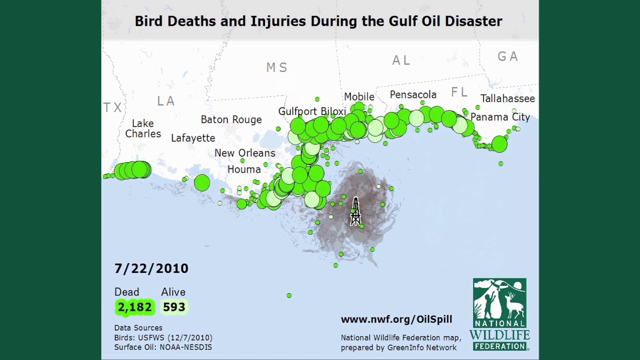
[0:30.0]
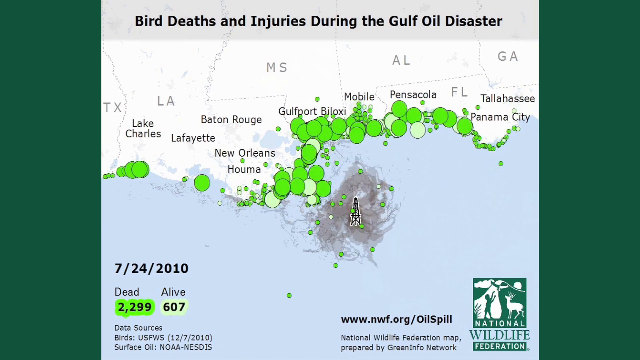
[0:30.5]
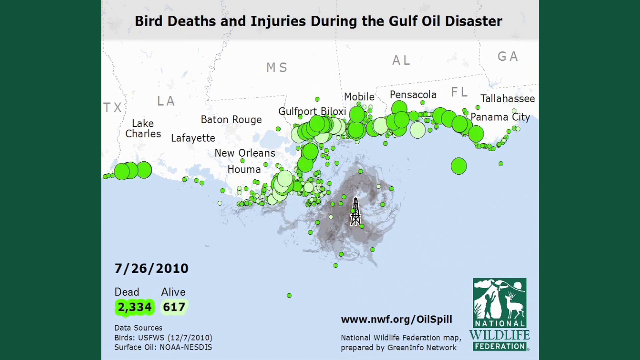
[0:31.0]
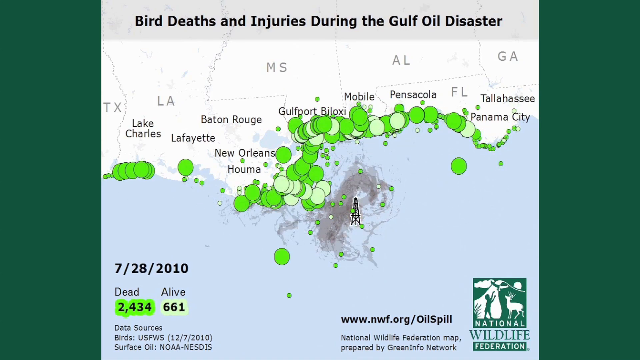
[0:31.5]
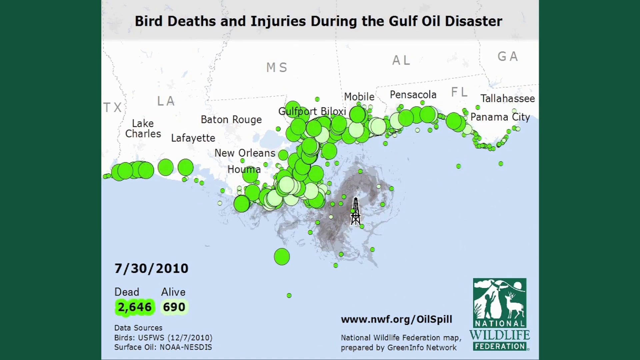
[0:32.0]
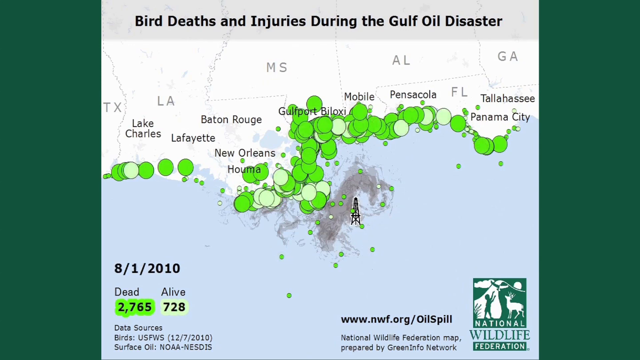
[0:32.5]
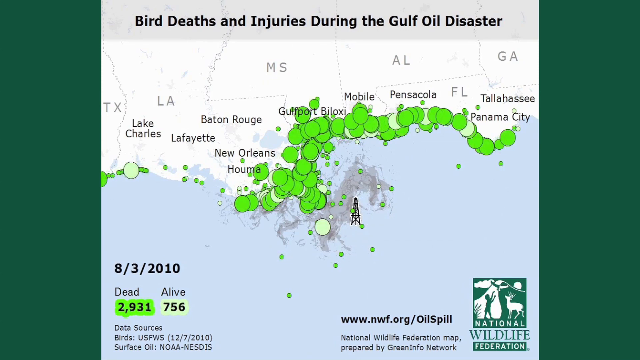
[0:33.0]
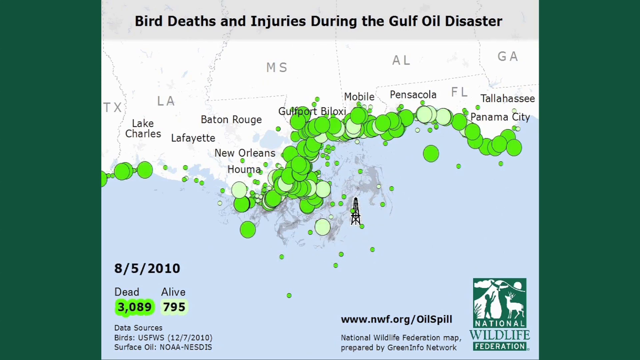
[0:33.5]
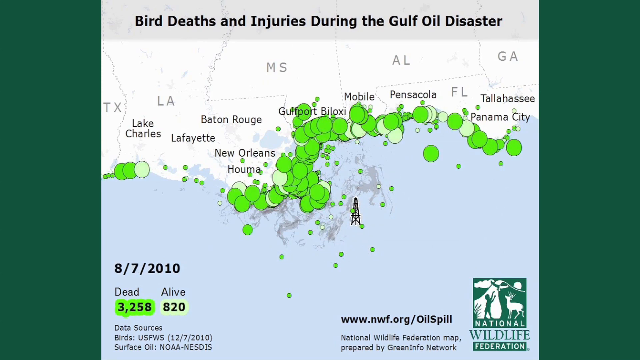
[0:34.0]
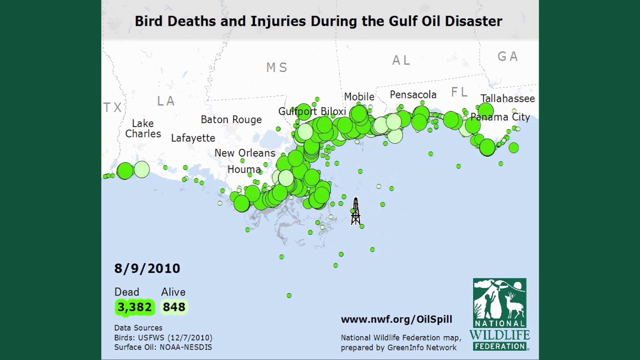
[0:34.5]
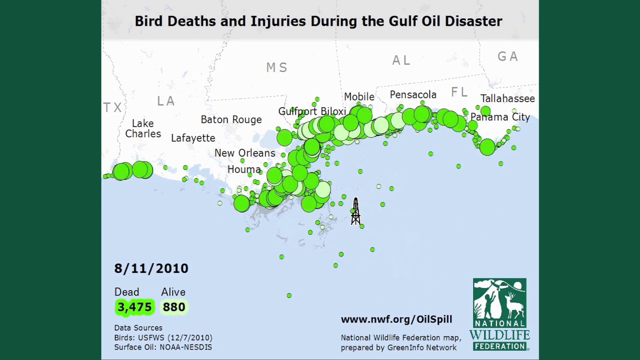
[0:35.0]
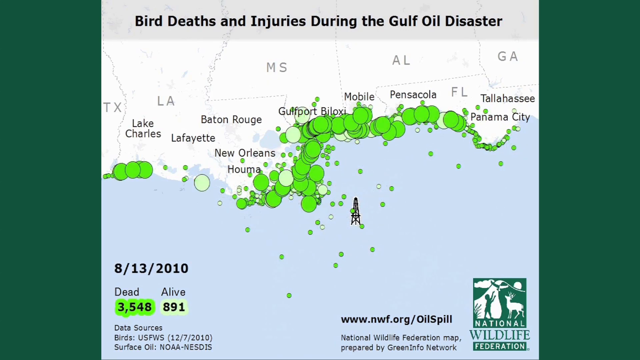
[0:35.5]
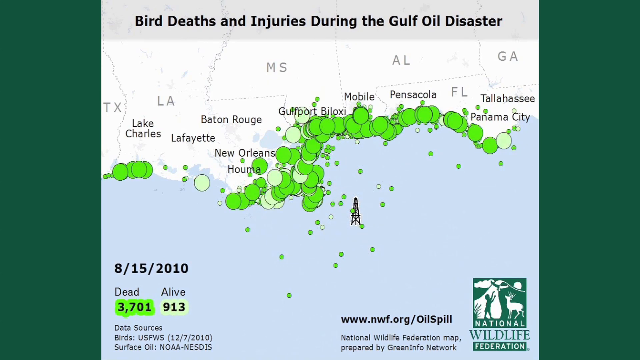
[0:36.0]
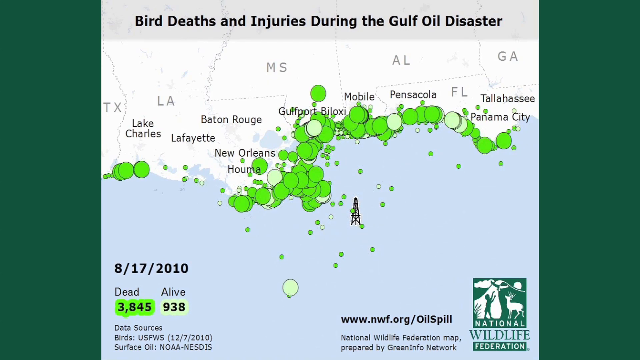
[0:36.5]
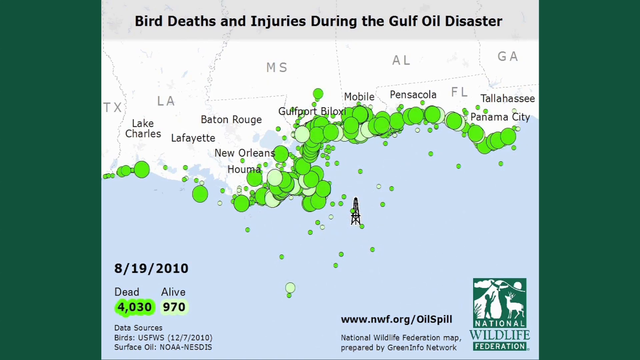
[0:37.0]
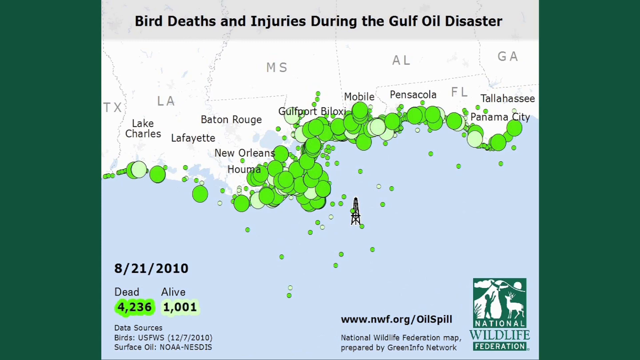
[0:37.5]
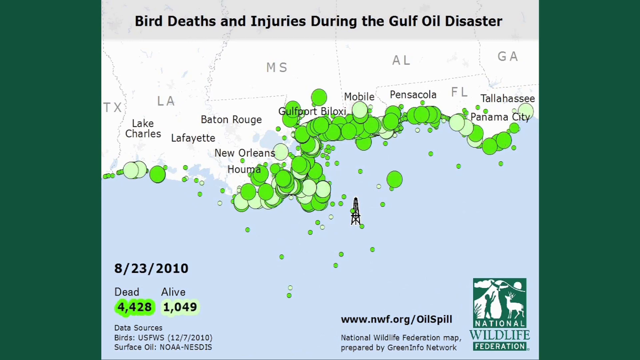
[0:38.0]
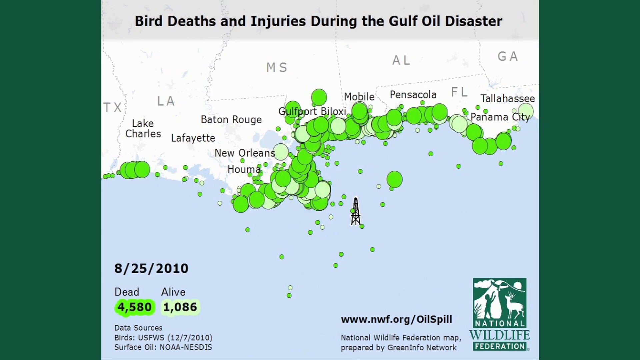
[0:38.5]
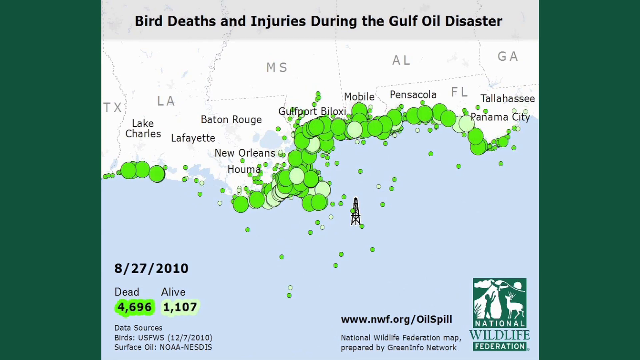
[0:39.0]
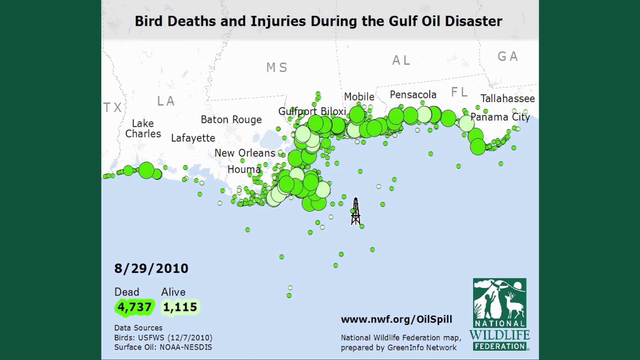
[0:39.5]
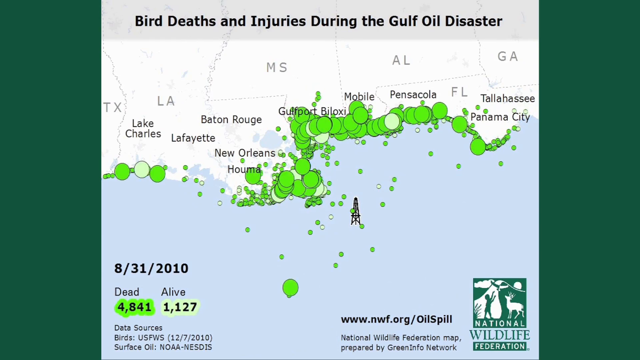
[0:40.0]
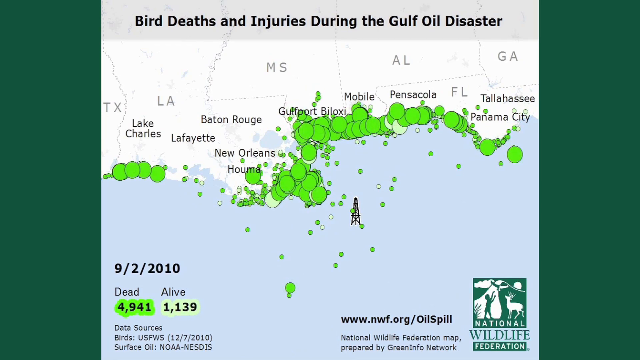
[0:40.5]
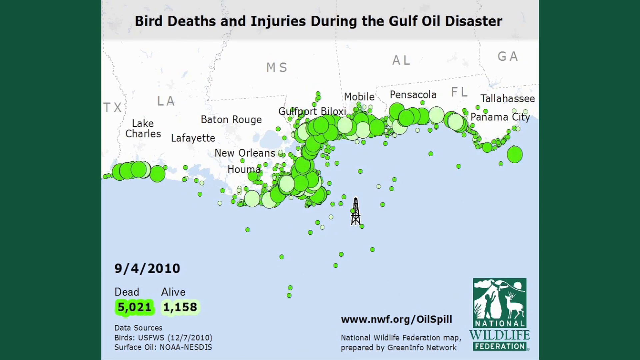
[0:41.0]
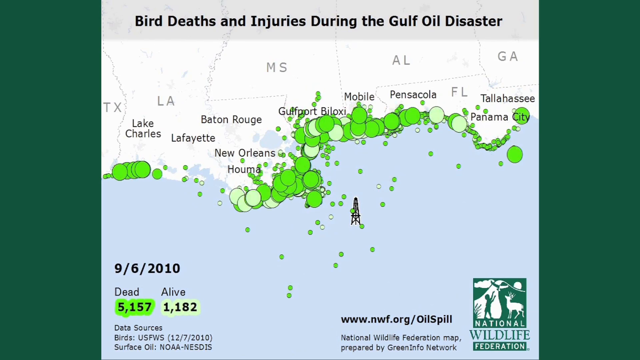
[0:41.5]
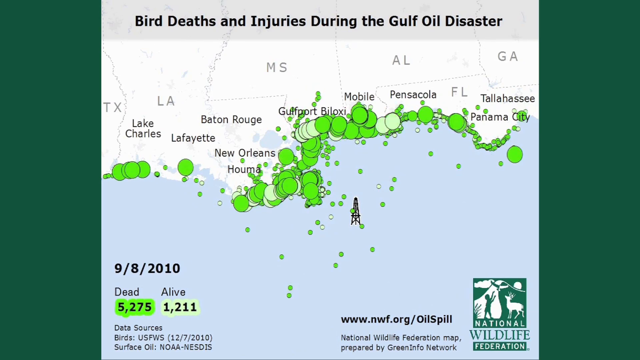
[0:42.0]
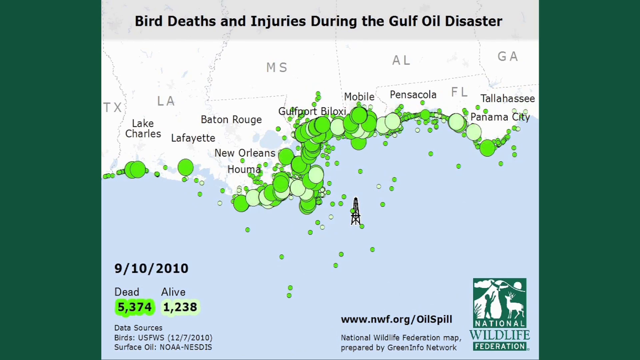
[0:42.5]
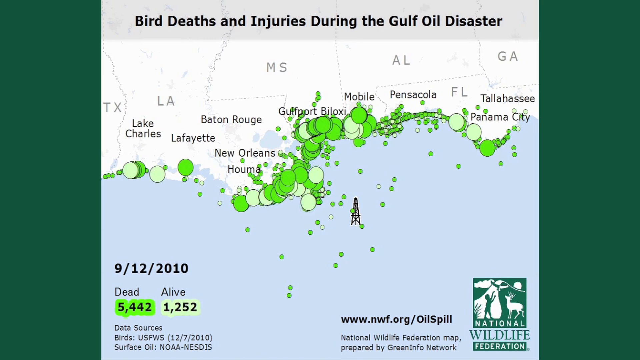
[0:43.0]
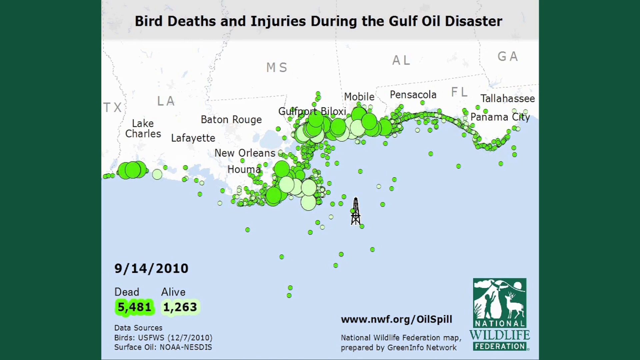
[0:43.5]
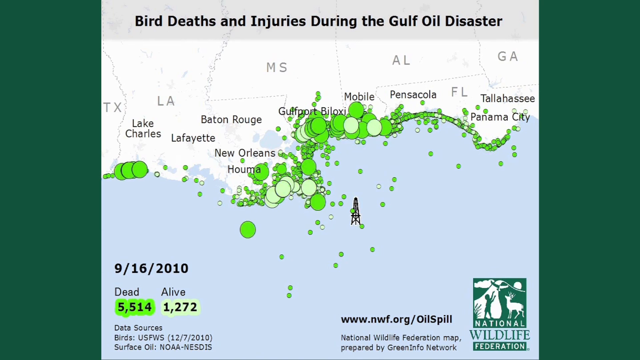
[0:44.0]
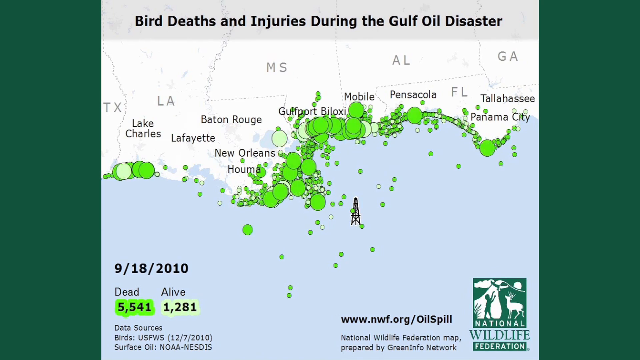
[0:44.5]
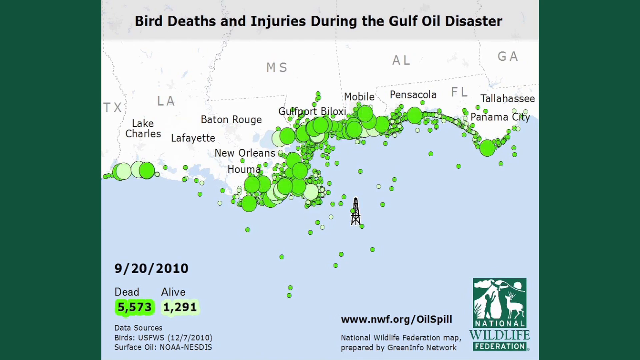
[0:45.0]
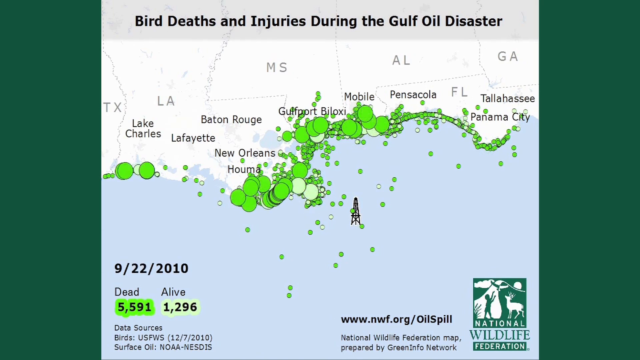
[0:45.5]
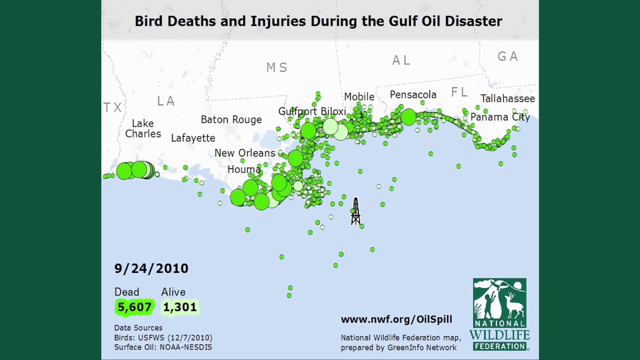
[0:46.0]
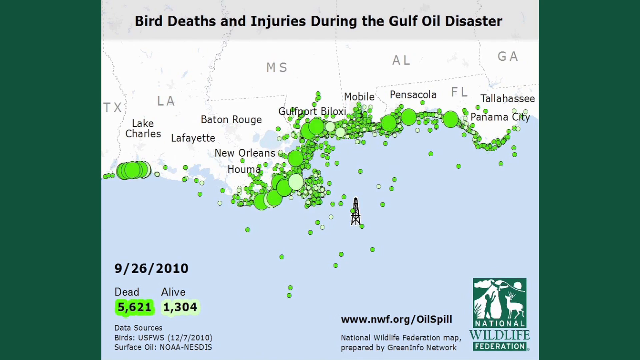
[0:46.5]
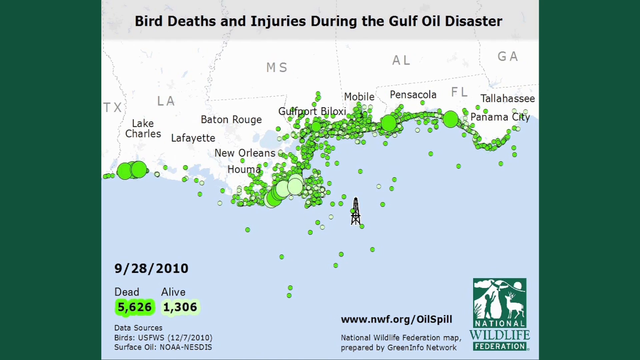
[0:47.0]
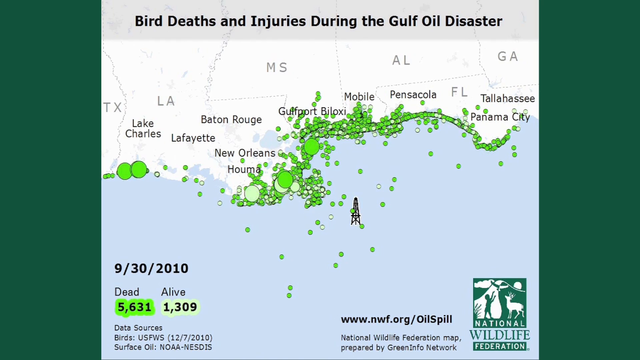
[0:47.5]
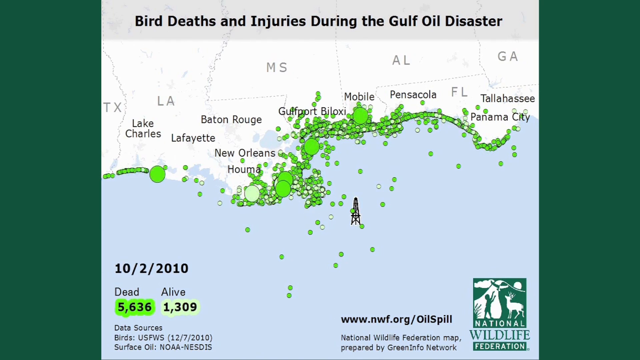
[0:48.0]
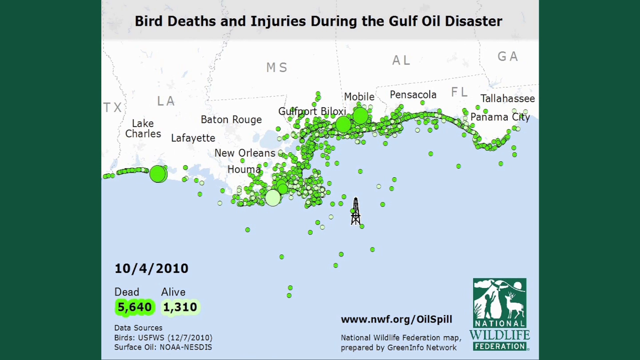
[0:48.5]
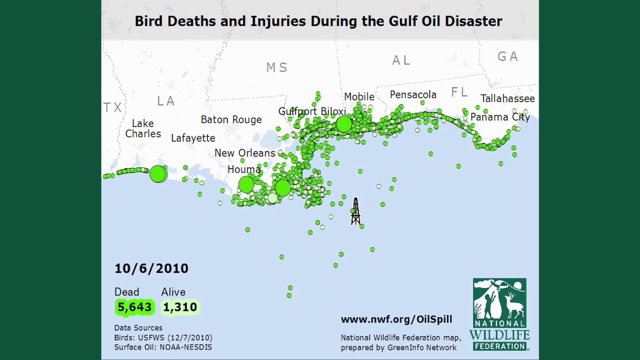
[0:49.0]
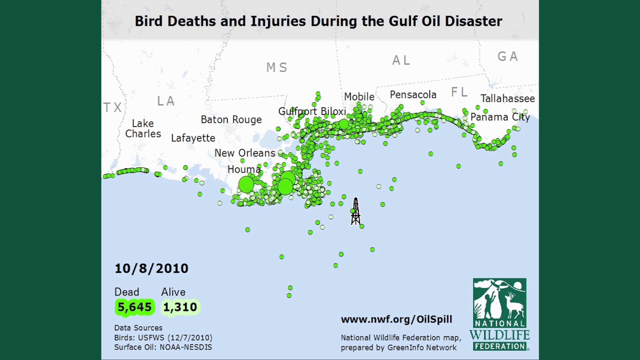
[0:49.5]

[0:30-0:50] At the top of a white and blue map, black text reads "bird deaths and injuries during the Gulf oil disaster." The map shows the south coast of America along the Gulf of Mexico, including Texas, Louisiana, Missouri, Alabama, Florida and Georgia, with many green dots representing dead or alive birds. In the middle is a black tower surrounded by brown smudges representing the oil. In the bottom left the date reads "July 24th, 2010," with "dead" at 2,299 highlighted in green and "alive" at 607 highlighted in light green. The date advances very quickly day by day through July 25th, 26th, 27th and onward, while green and light green dots appear and disappear along the coast and some near the tower, at least around 50 each day. The dates continue through August, September and October, stopping at October 9th, when dead has risen to 5,649 and alive to 1,310. The brown smudge around the black tower starts disappearing around August 17th, after which no brown smudges remain and only the green and light green dots are shown.